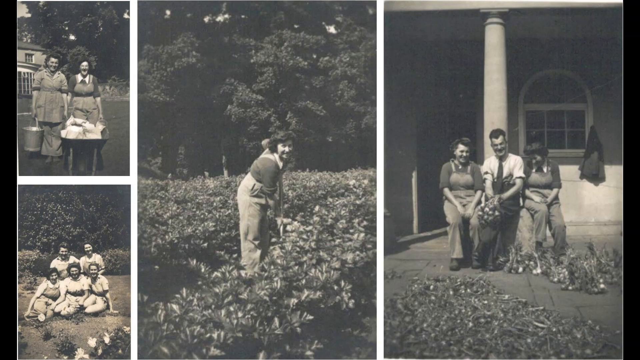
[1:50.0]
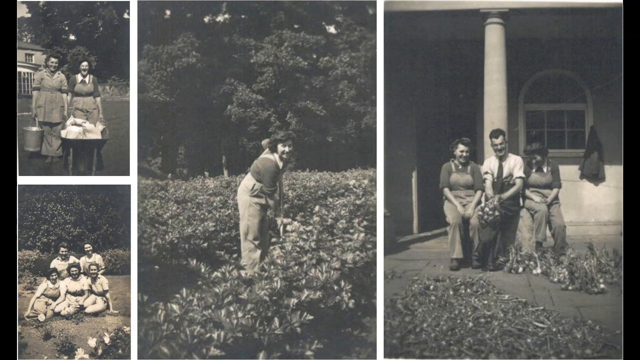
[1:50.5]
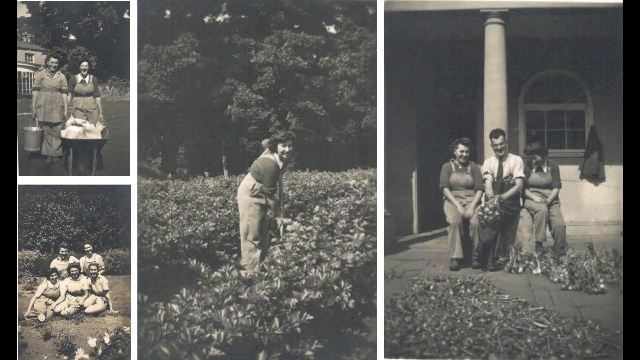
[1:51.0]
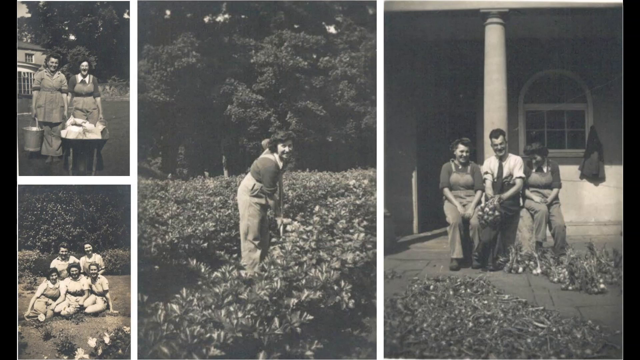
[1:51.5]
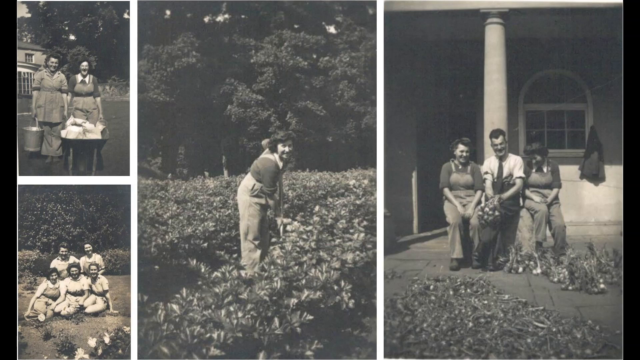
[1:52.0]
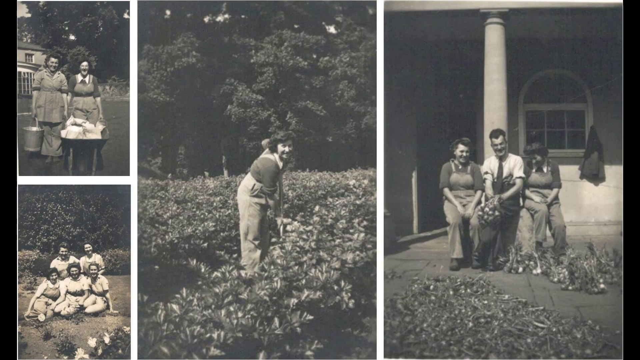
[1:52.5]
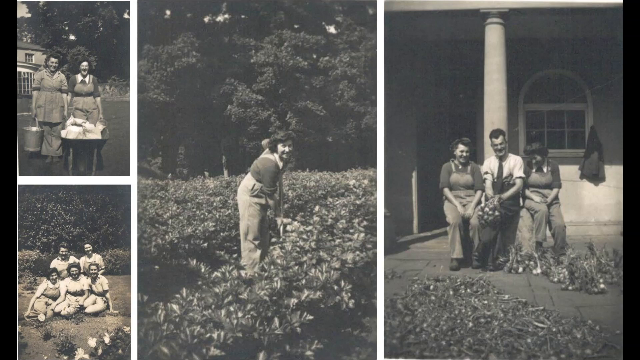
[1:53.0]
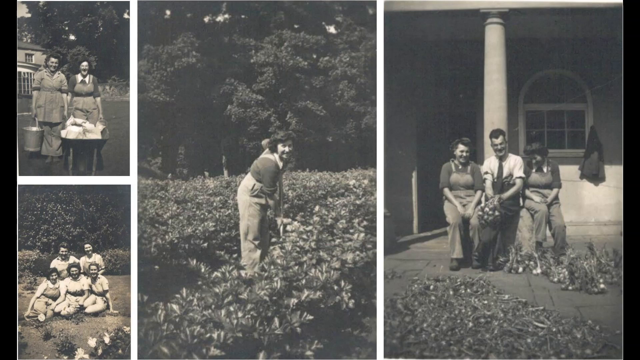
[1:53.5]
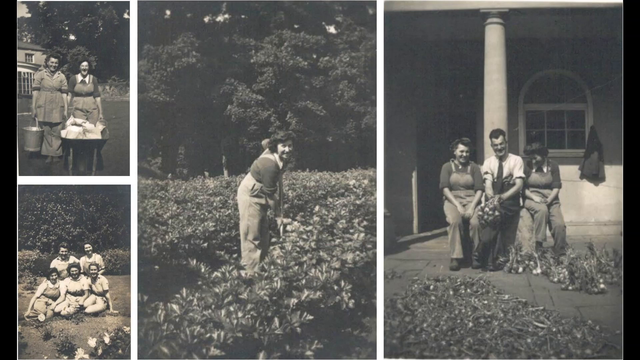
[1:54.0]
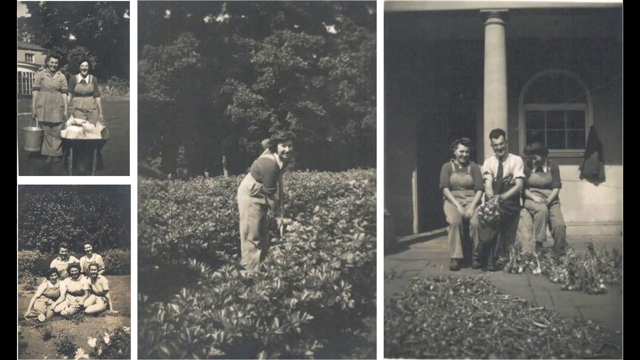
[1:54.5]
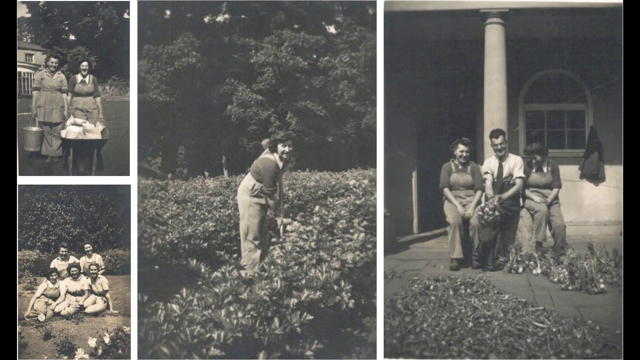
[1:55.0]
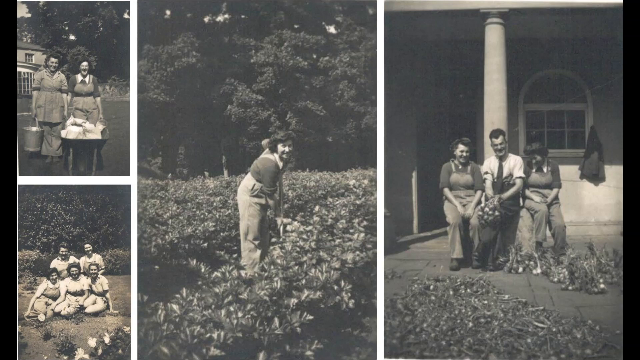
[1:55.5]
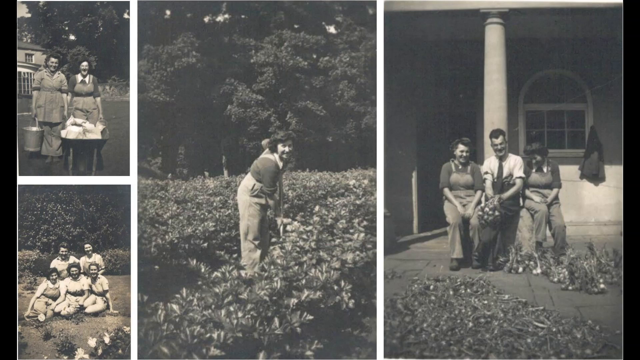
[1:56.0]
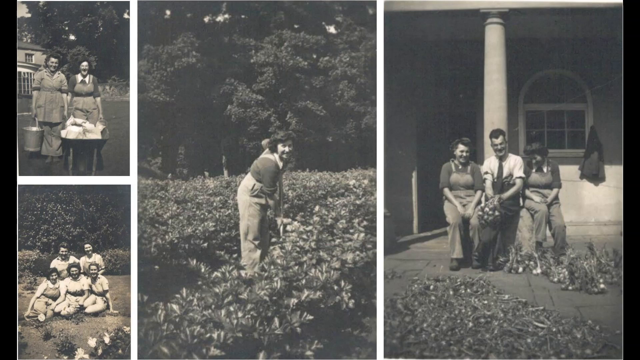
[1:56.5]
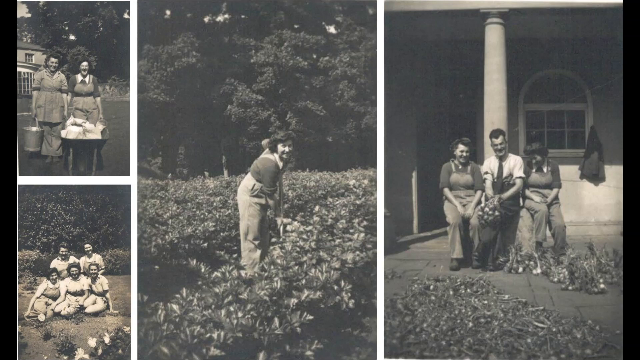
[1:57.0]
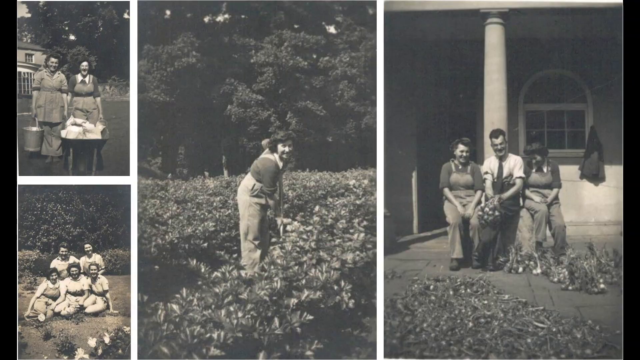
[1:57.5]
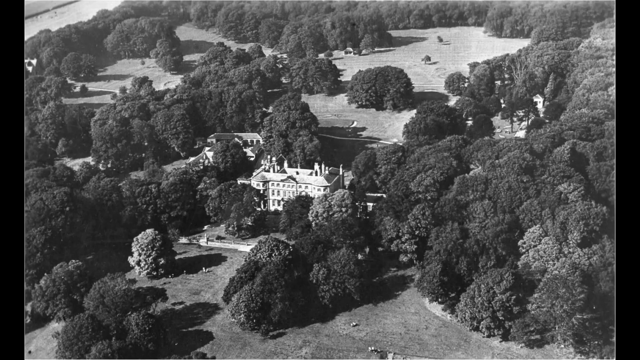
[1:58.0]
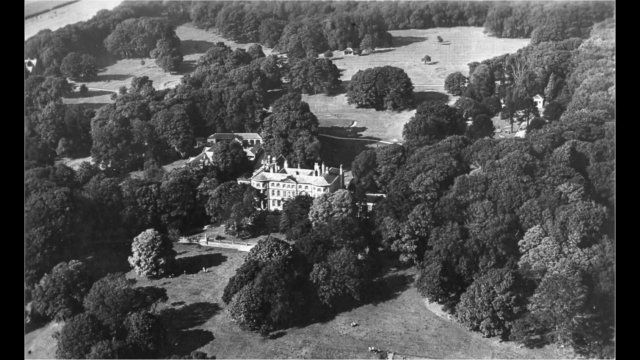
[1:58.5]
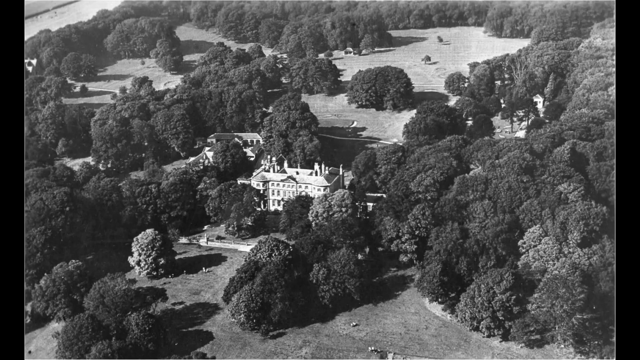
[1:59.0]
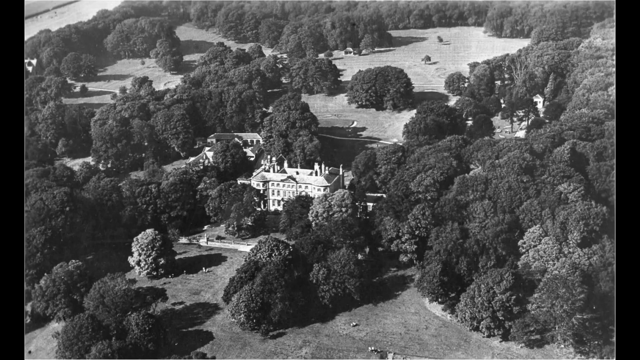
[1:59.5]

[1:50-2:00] Several different pictures are shown. One picture shows a woman with a hoe in a field. Another shows a man sitting down beside two women, with fresh vegetables at their feet. A picture at the bottom left shows five women: three have knelt on the ground and two are on their knees behind them. Above that is a picture of two women, one with a wheelbarrow and one with a bucket.